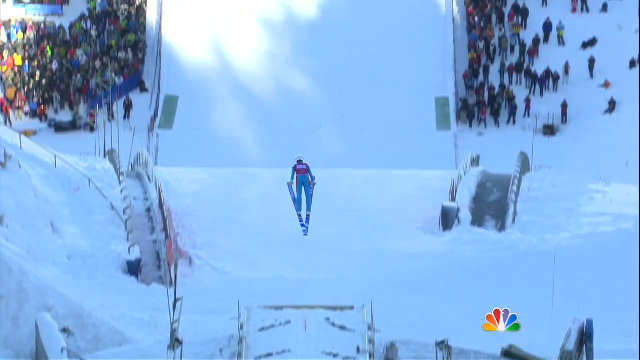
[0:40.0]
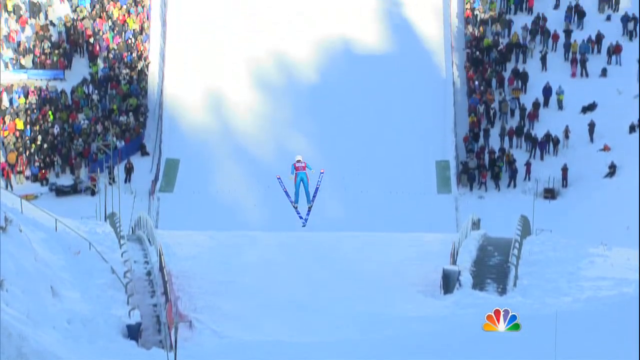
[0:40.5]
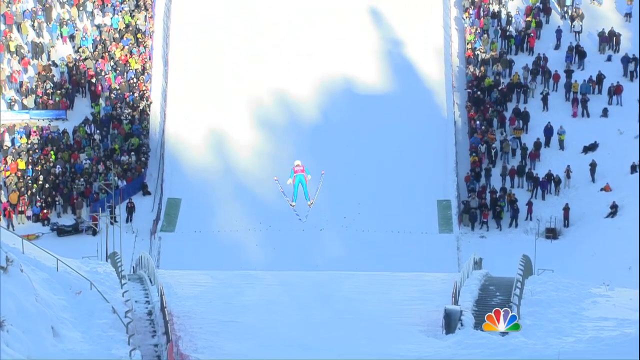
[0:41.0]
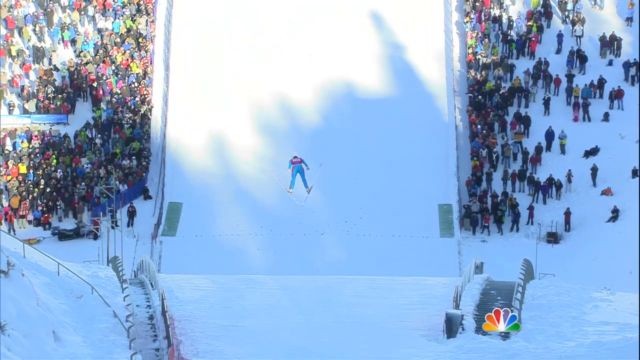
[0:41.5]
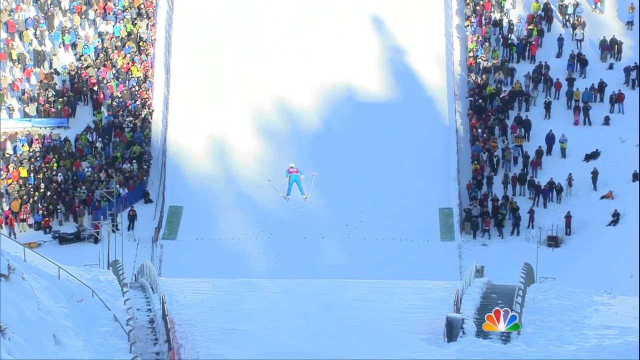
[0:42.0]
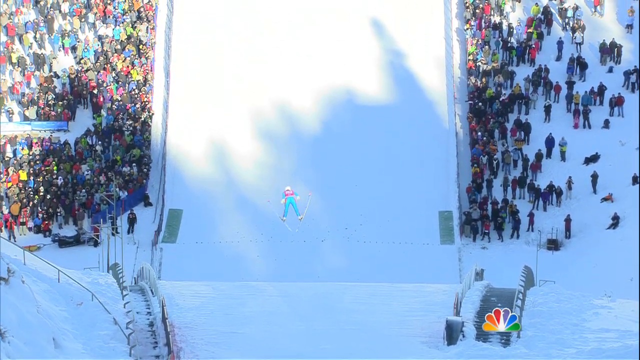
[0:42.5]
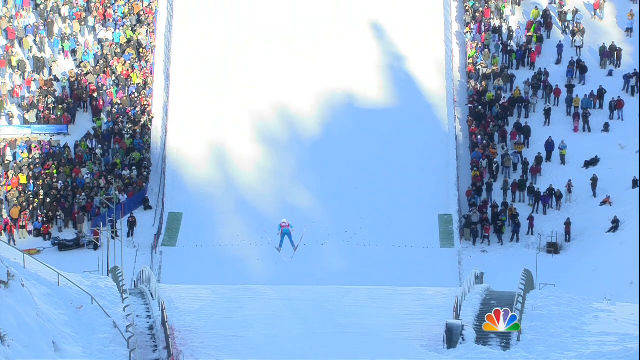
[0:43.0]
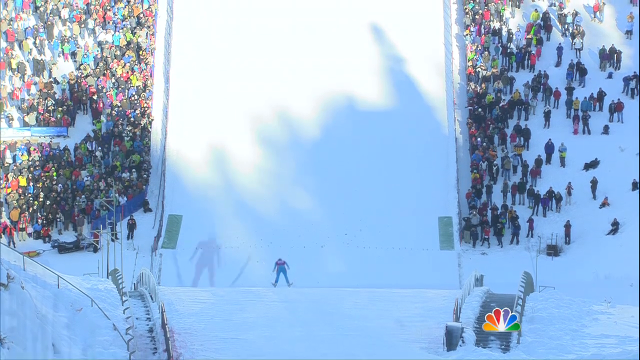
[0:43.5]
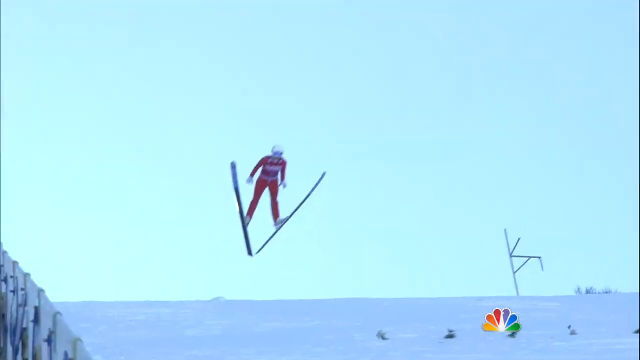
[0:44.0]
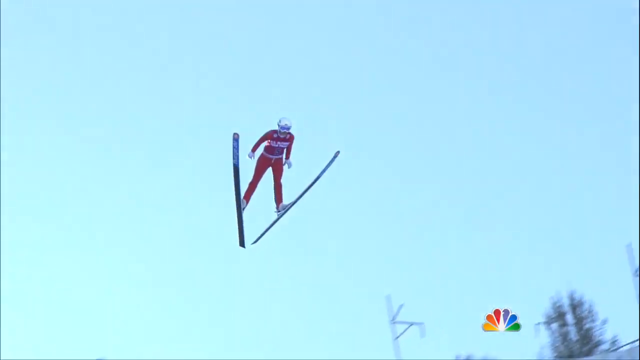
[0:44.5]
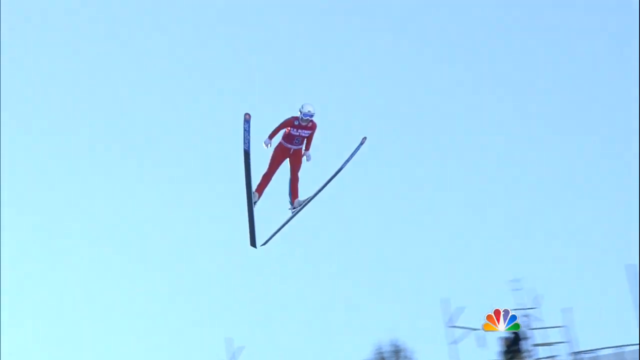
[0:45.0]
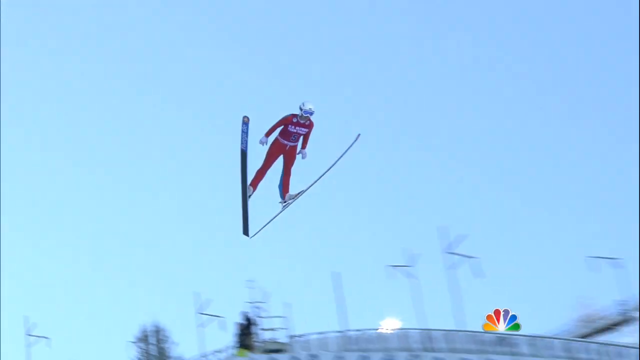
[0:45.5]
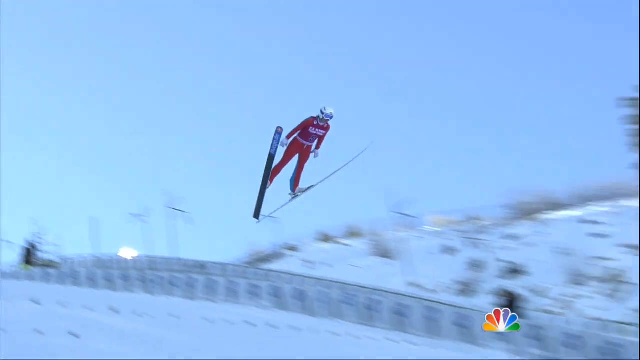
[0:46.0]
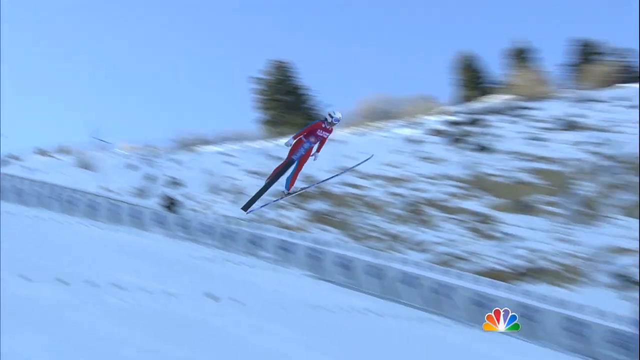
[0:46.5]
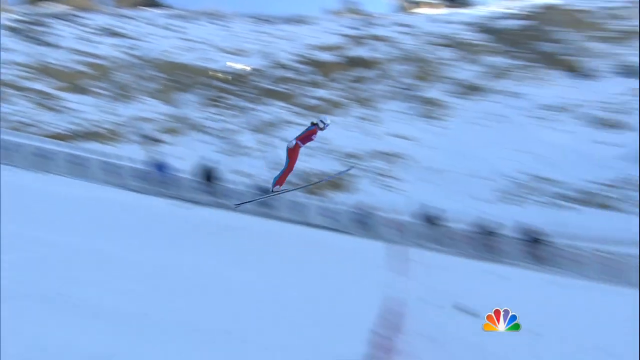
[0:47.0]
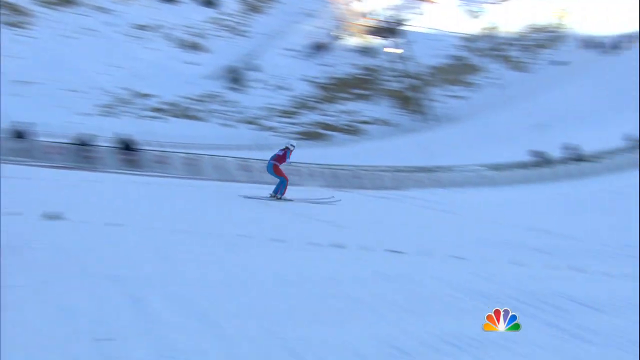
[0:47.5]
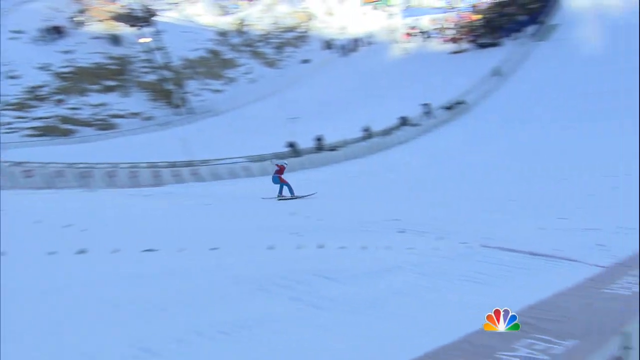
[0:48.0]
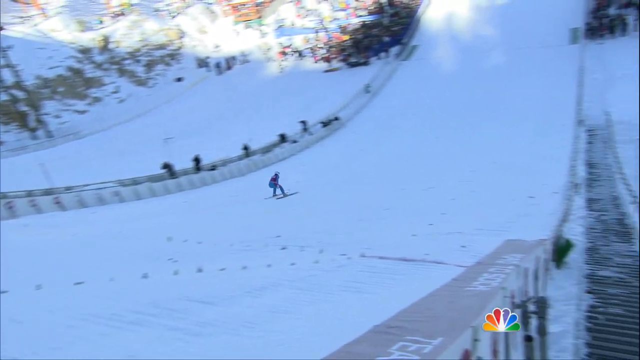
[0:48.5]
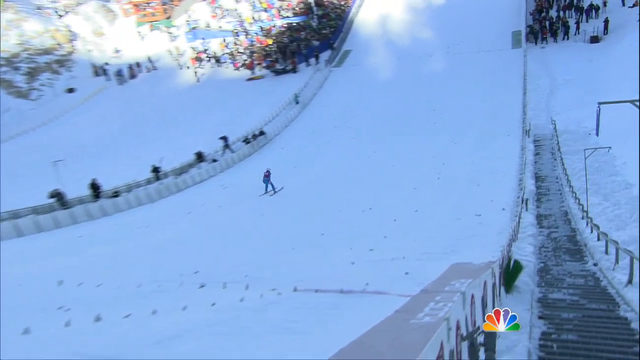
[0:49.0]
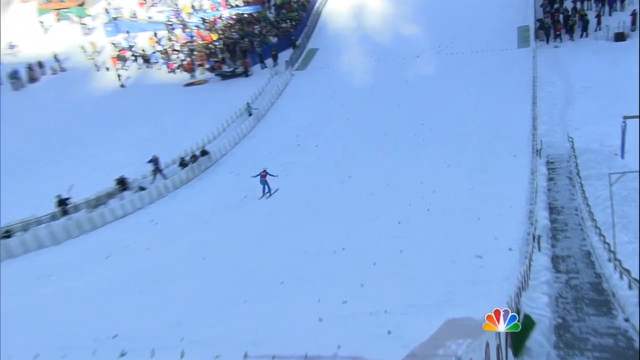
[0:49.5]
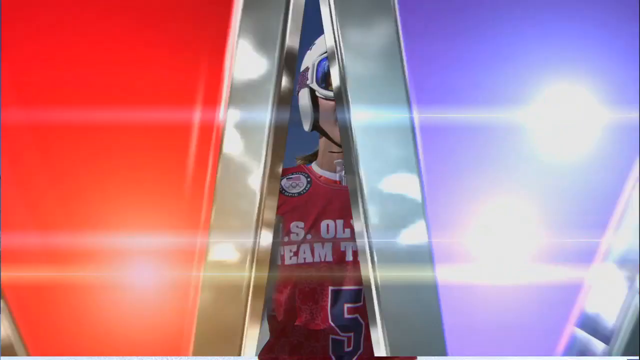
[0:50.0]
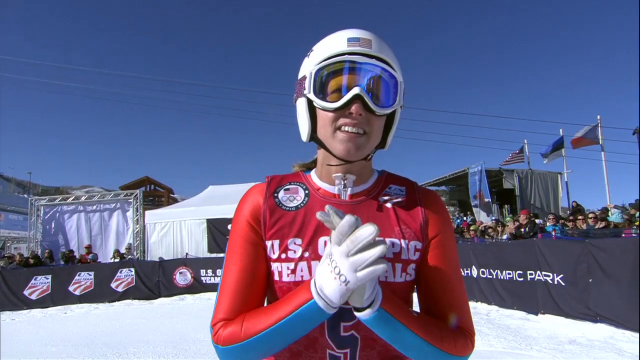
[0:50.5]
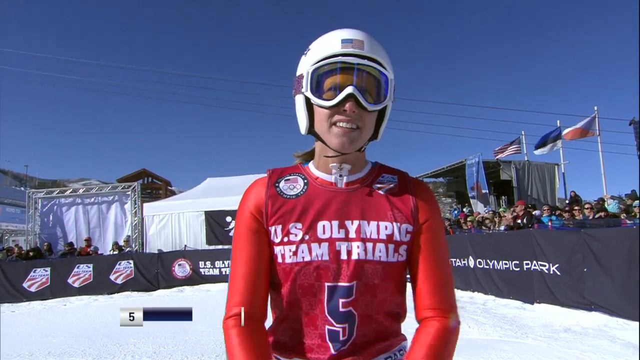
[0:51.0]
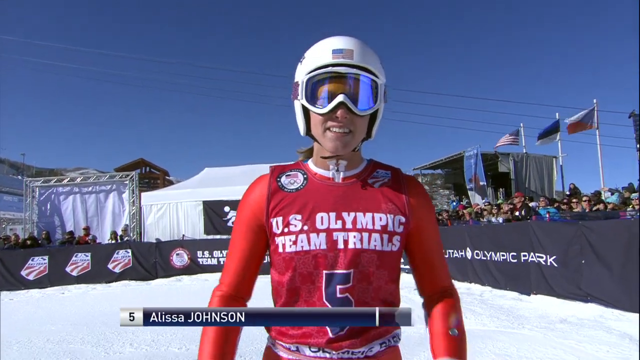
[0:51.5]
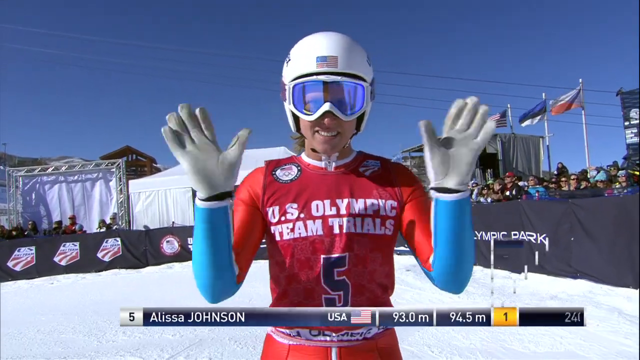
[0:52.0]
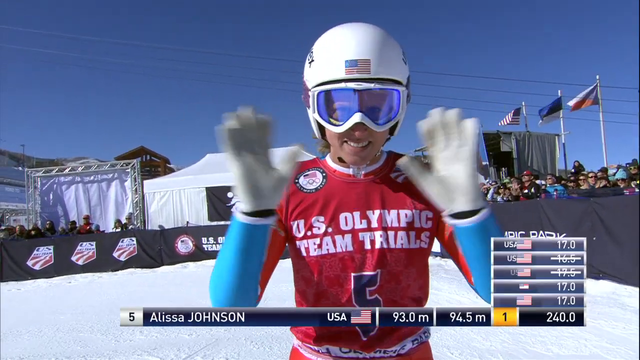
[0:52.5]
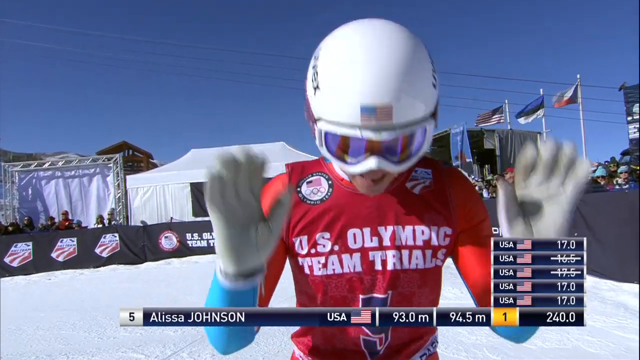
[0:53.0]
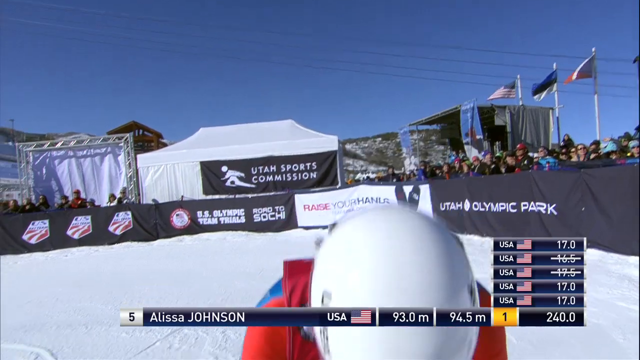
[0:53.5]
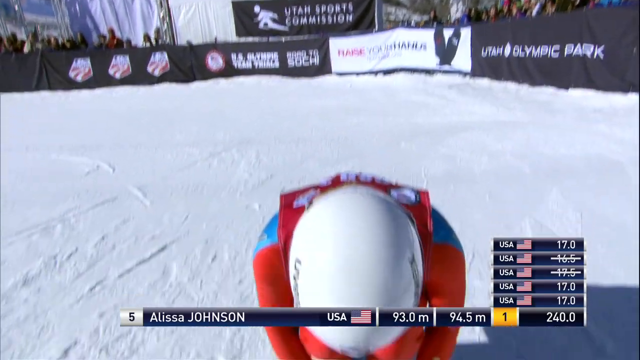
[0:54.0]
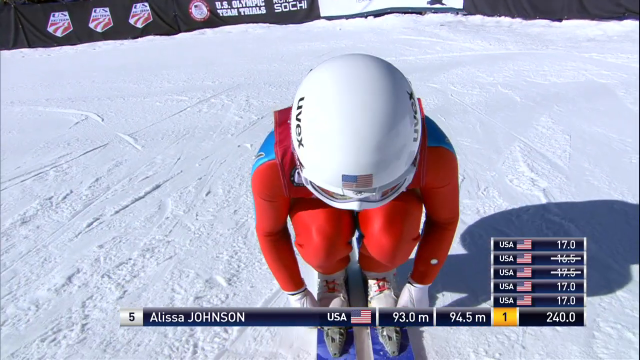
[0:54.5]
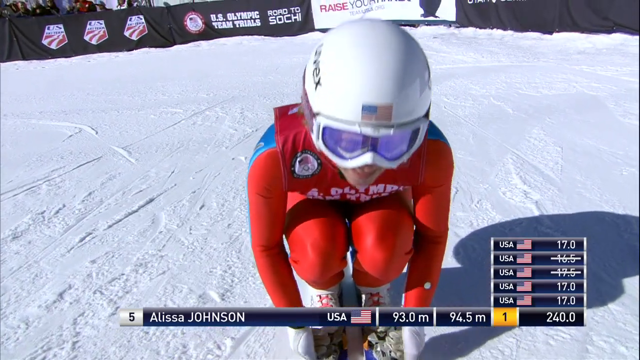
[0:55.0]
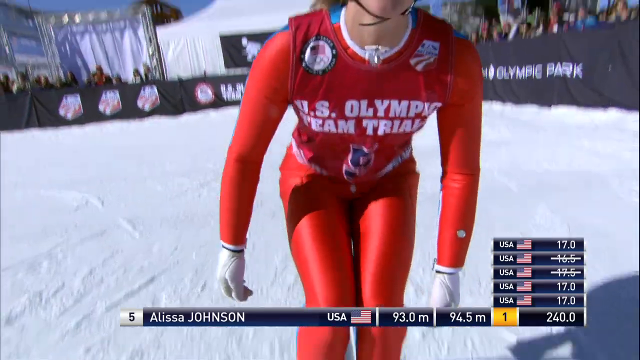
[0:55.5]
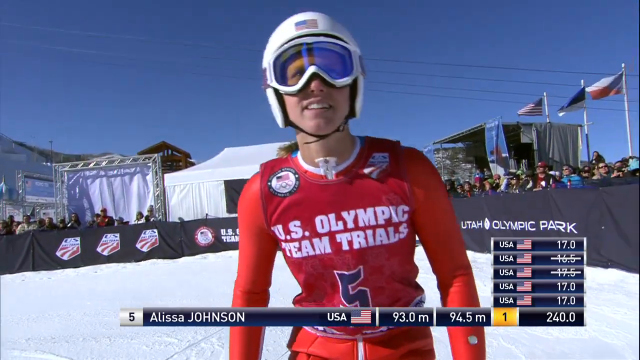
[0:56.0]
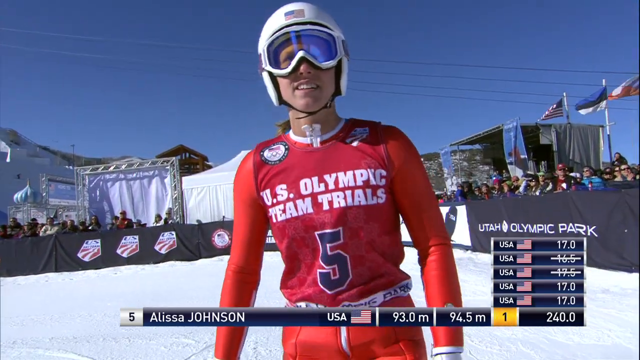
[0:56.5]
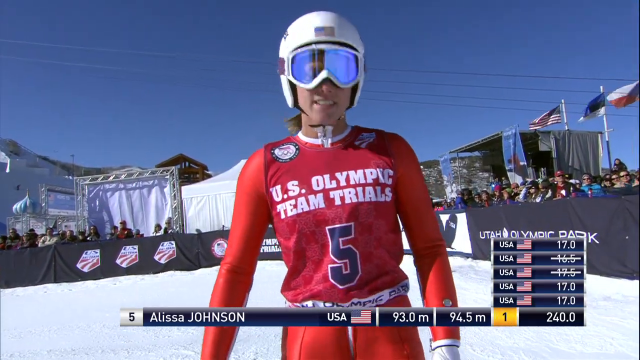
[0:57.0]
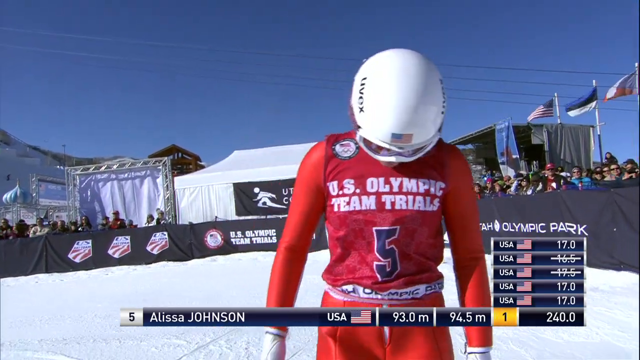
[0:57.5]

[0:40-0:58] A view from behind shows the skier, in a blue and red outfit and blue skis, soaring through the air with her skis spread out, pointing in opposite directions. The camera tracks her movement toward the ground. The view then changes to one from the bottom of the slope, where she flies past the screen in the air as she passes the landing zone. Her skis hit the ground and she spreads her arms out to brace and stay steady. A close-up then shows her after she has stopped. She claps her hands together and holds them in that position, then lowers them and waves her hands back and forth at the camera as if saying hello to people who might be watching. She bends down and unbuckles her feet from the skis, taking her right foot and then her left foot off the skis one by one. She stands back up and looks toward the ground. A scoreboard on the right side of the screen shows "USA" and various stats ranging from 16.5 to 17.5. Text at the bottom of the screen shows her name, "Alyssa Johnson", "USA", and the distances of her jump, "93 meters" and "94.5 meters".